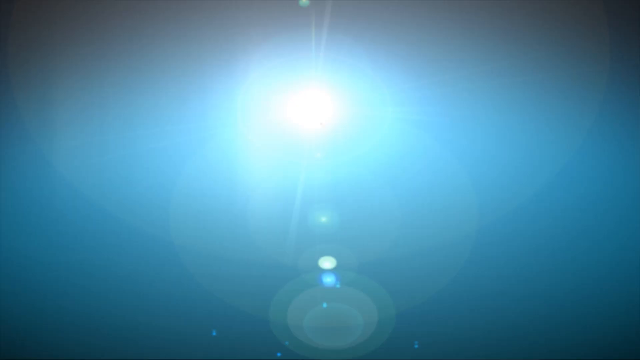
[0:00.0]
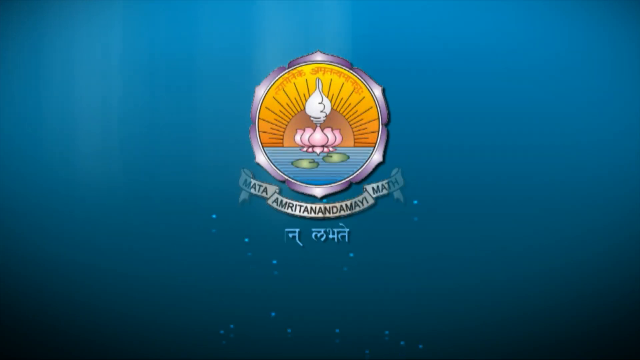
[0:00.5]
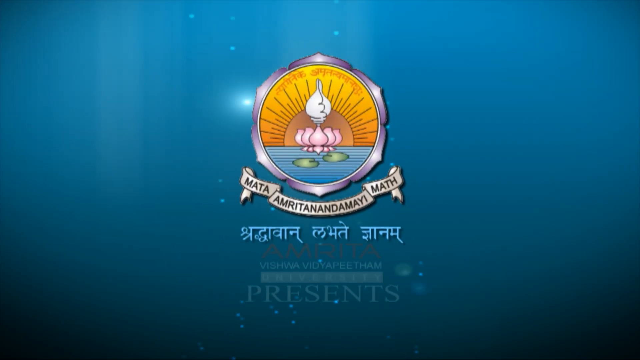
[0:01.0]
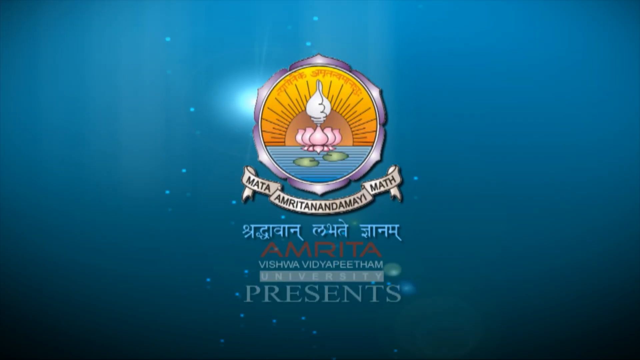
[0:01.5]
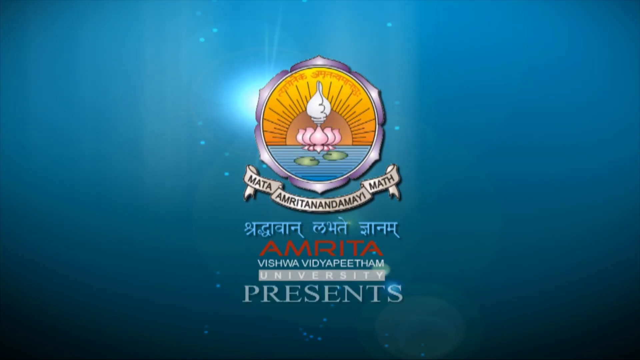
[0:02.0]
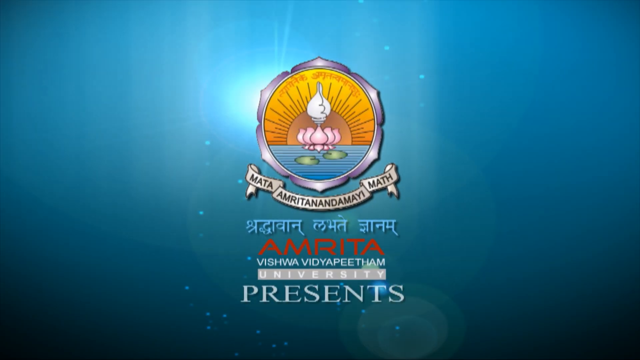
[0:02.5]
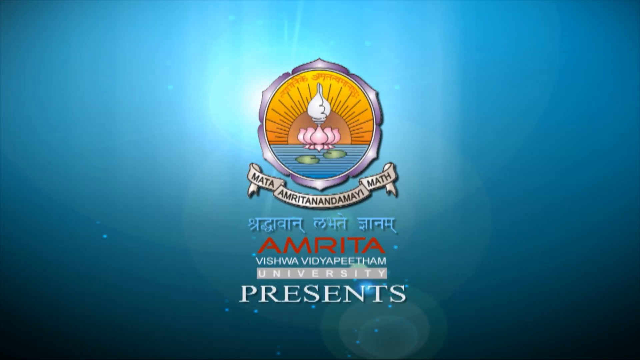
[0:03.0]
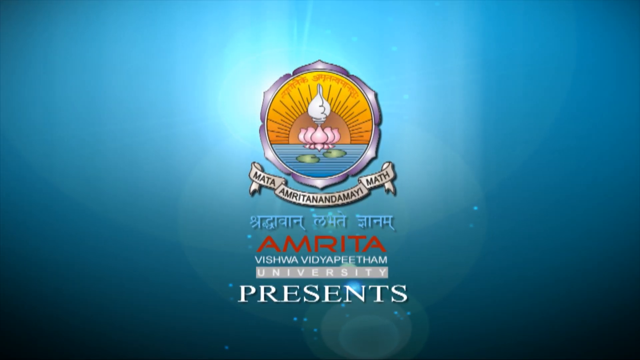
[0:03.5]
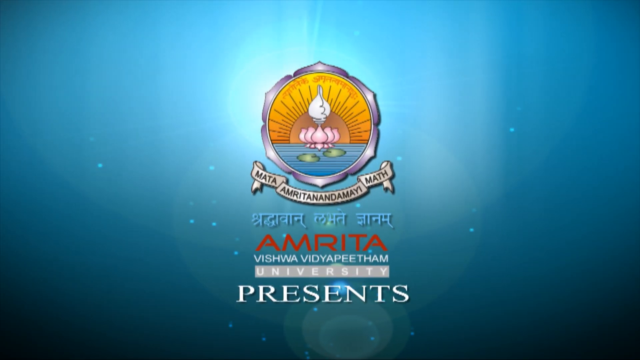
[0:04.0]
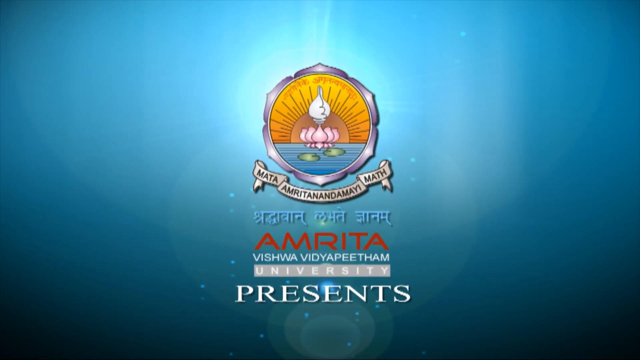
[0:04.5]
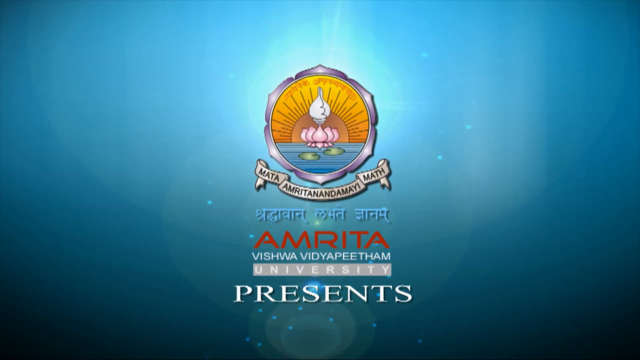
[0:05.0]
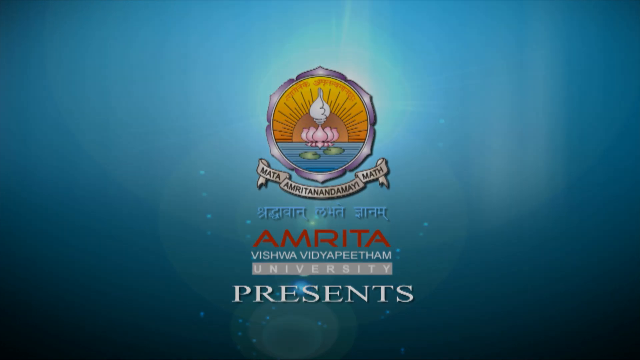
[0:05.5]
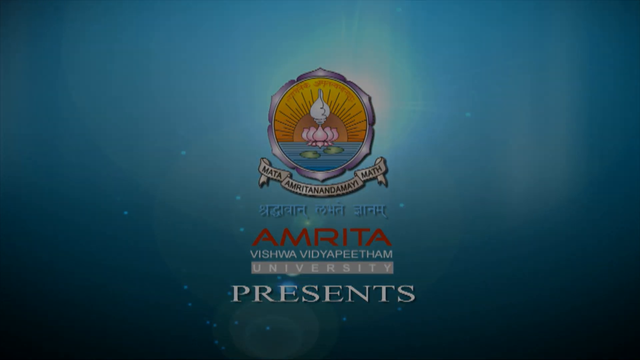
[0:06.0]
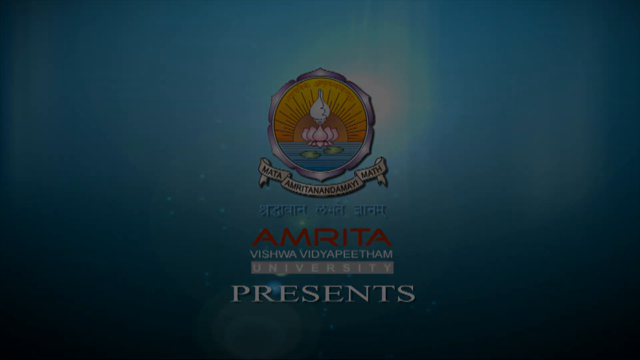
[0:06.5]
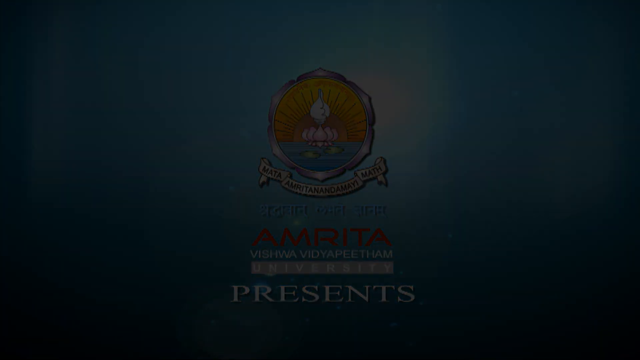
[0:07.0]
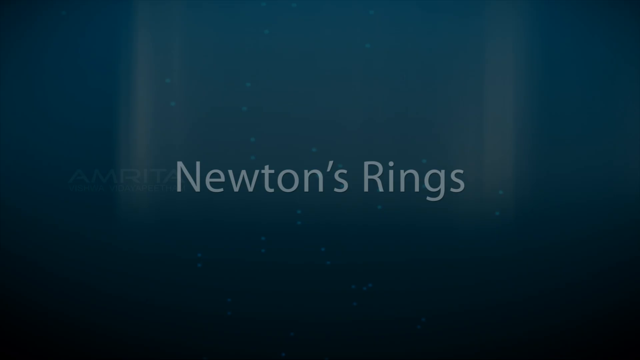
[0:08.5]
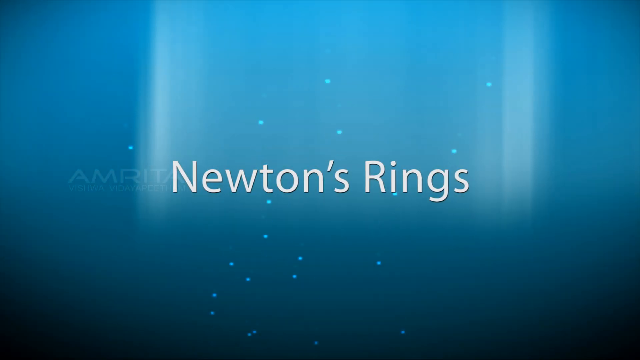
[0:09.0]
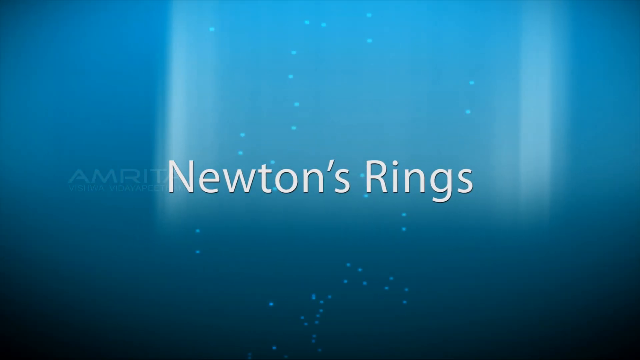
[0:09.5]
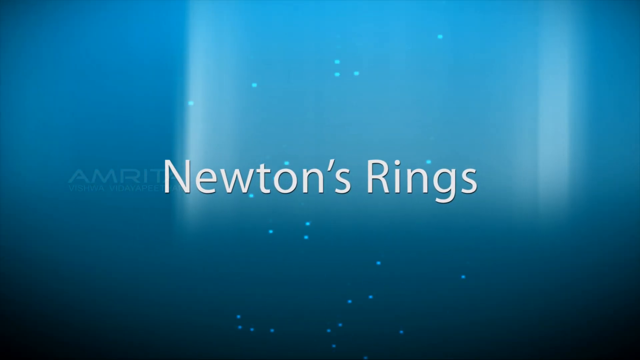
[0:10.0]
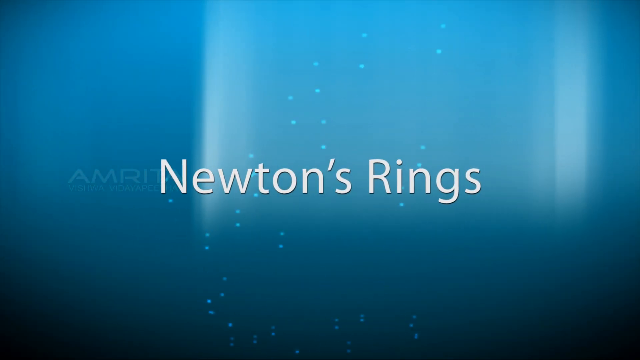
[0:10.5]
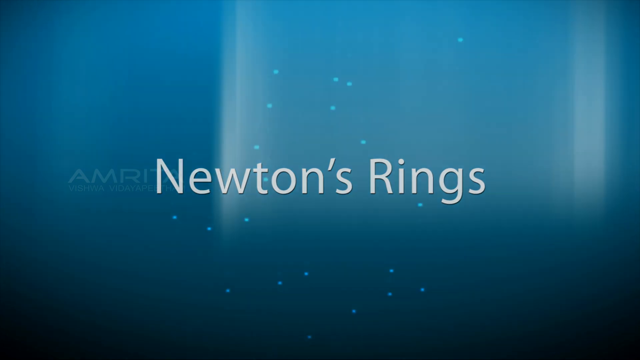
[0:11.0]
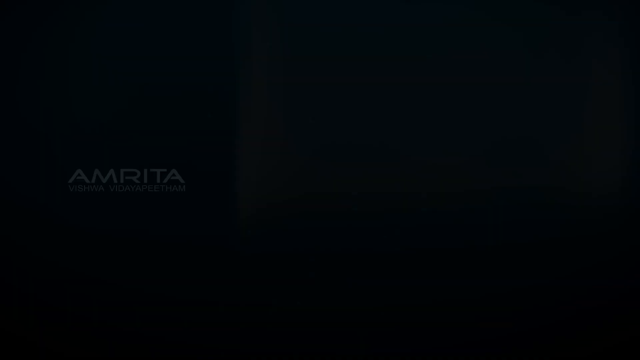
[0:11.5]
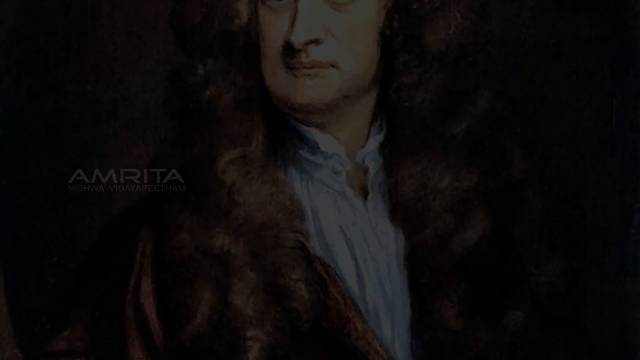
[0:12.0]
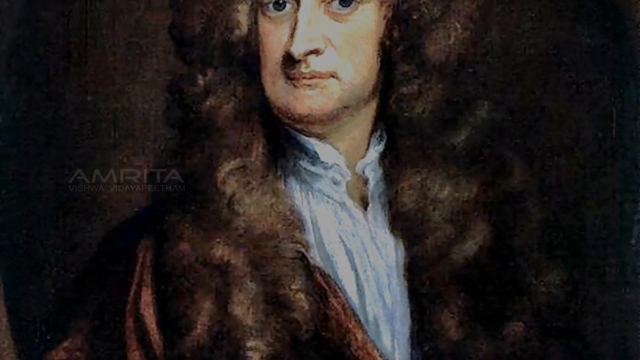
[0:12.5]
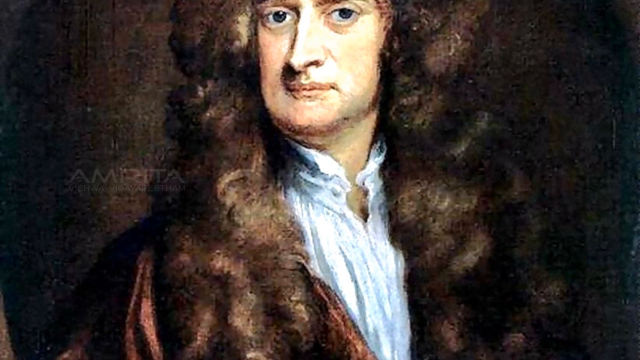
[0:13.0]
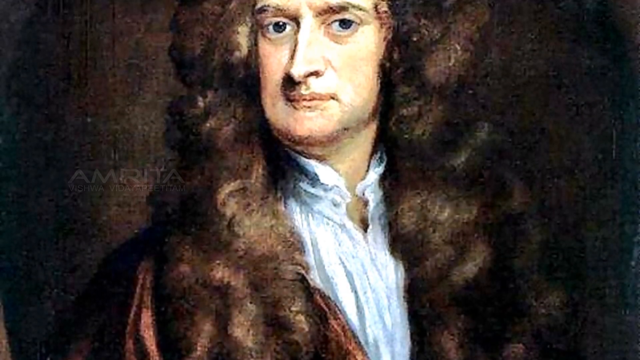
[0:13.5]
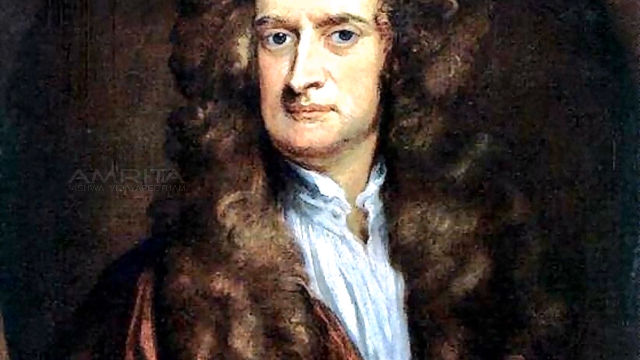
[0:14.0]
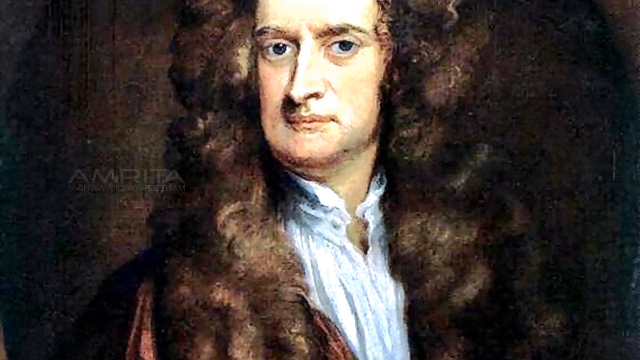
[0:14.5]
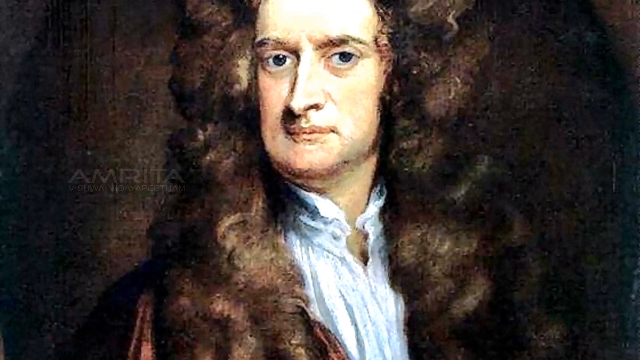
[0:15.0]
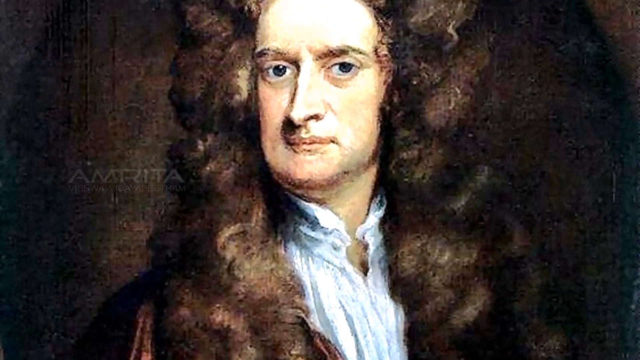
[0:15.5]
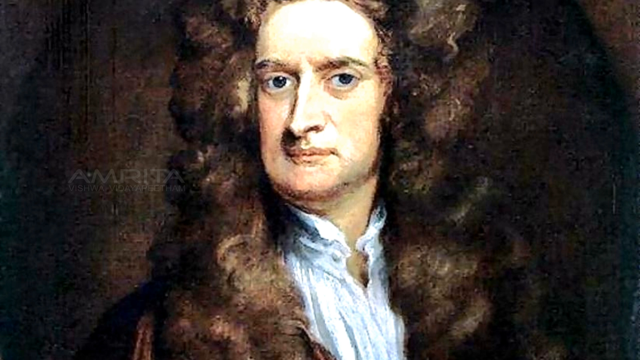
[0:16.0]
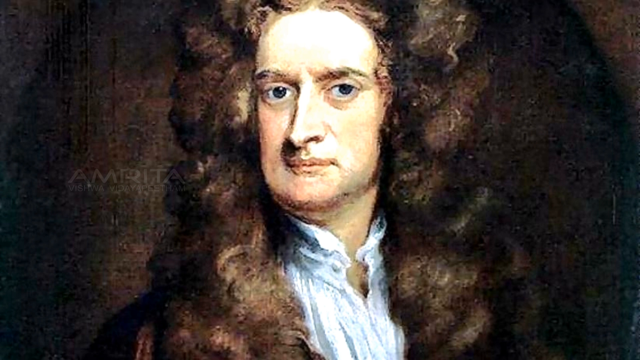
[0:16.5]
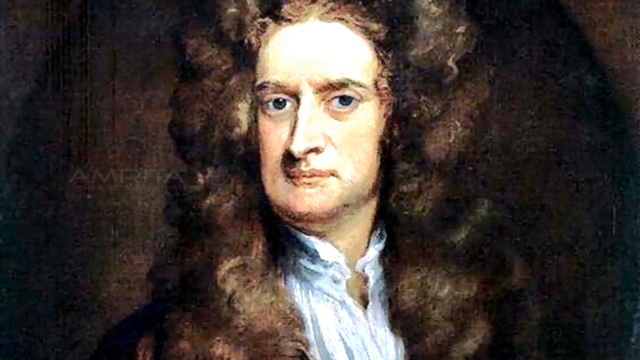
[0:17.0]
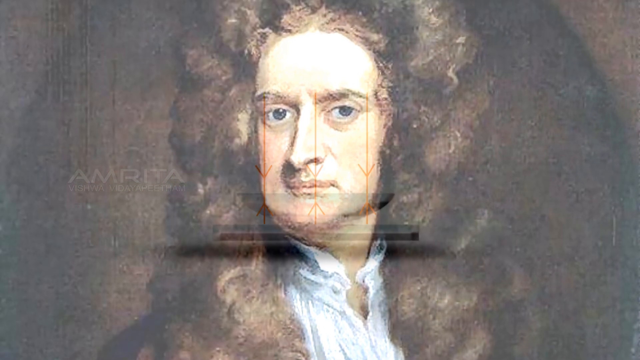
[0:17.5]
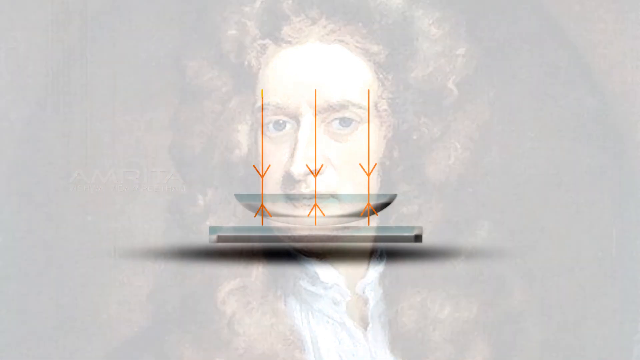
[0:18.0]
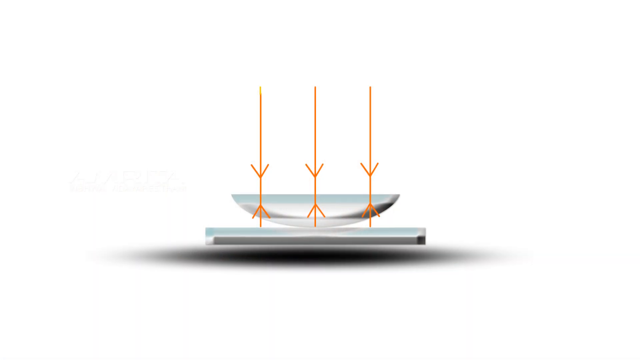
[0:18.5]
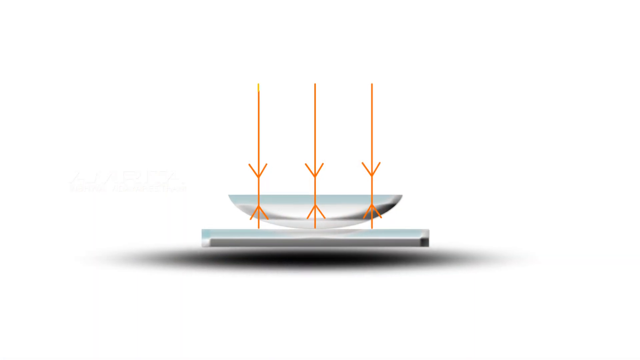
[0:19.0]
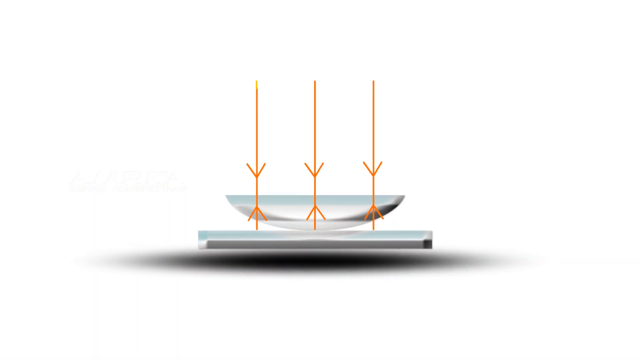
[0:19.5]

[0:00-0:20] The video opens on a blue background, and a logo appears. It is gold and blue, with what looks like a lotus in a pinkish-purple color, and beneath it is some kind of Asian writing in an unidentified language. This fades to black, and the words "Newton's rings" appear. That fades out, giving way to a still, computer-generated image of Sir Isaac Newton, apparently a computer-generated painting probably based on a real painting. He looks straight ahead with a very serious expression, has long curly hair, and wears attire typical of his era. The camera starts a little low on him and slowly pans upward to the top of his head, then the image fades out to another computer-generated image with a white backdrop and a couple of objects on it.